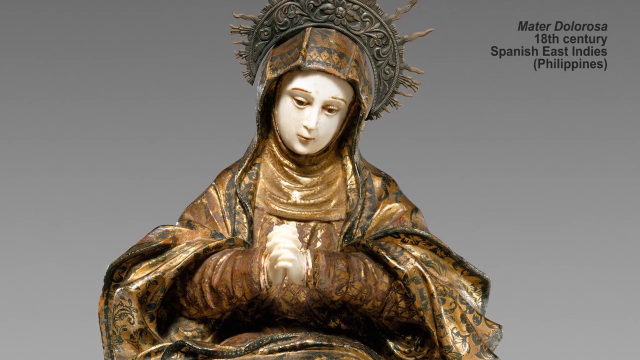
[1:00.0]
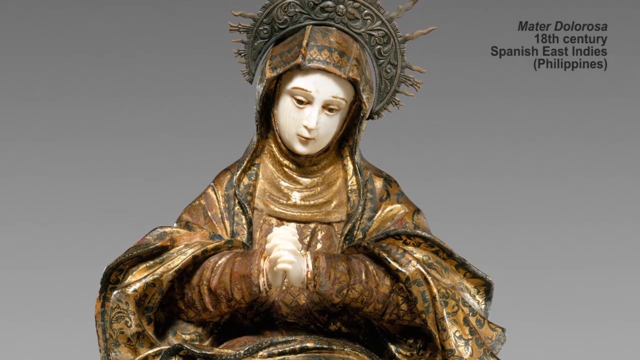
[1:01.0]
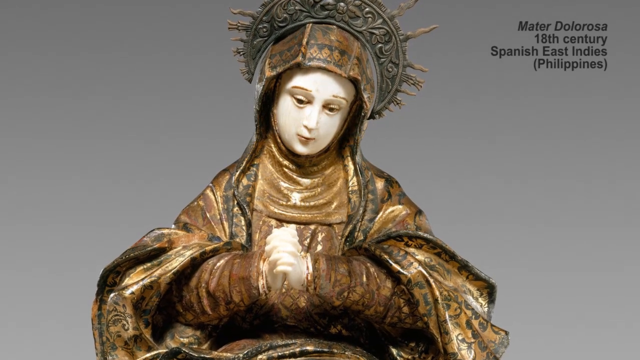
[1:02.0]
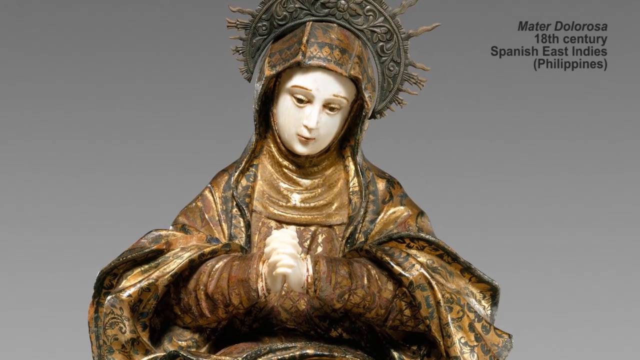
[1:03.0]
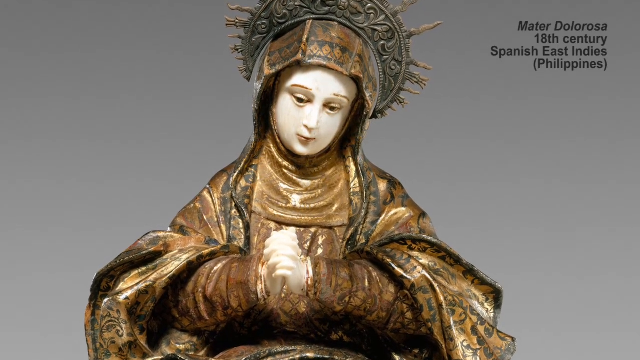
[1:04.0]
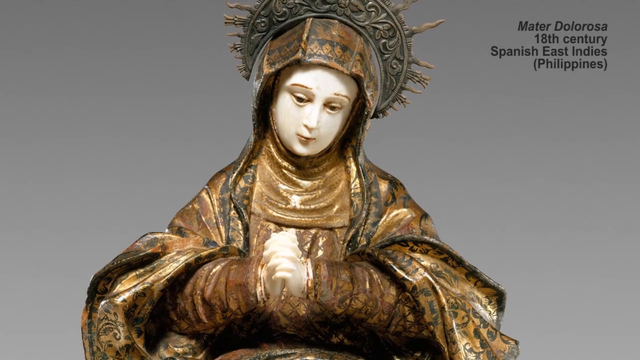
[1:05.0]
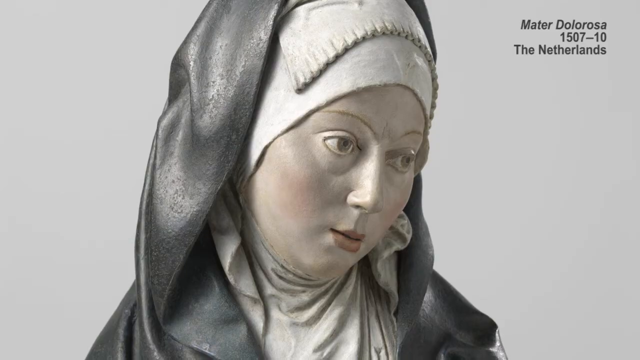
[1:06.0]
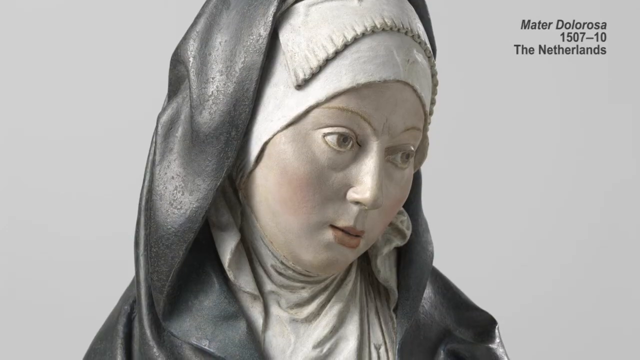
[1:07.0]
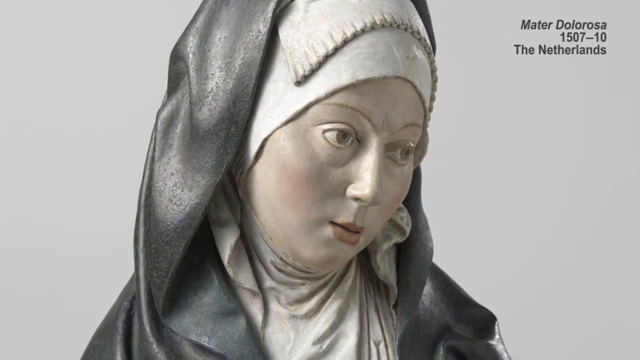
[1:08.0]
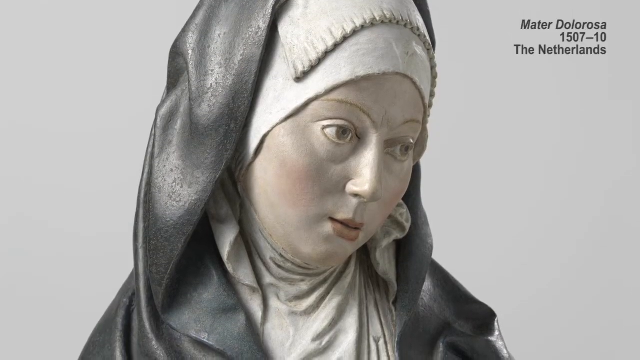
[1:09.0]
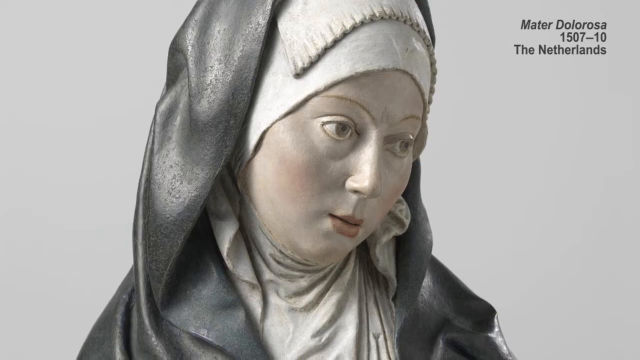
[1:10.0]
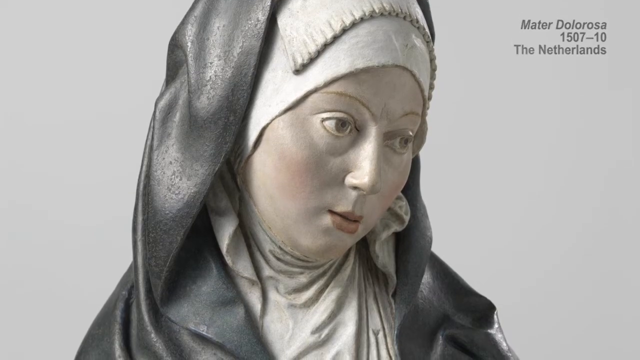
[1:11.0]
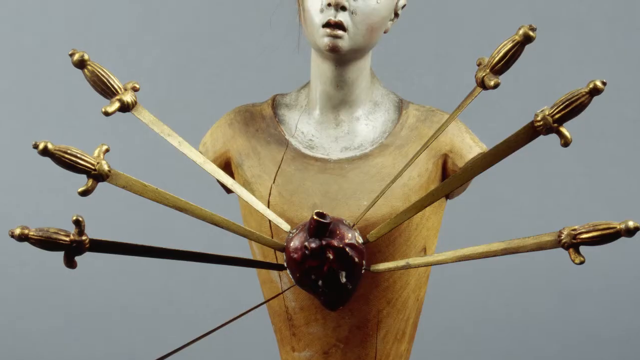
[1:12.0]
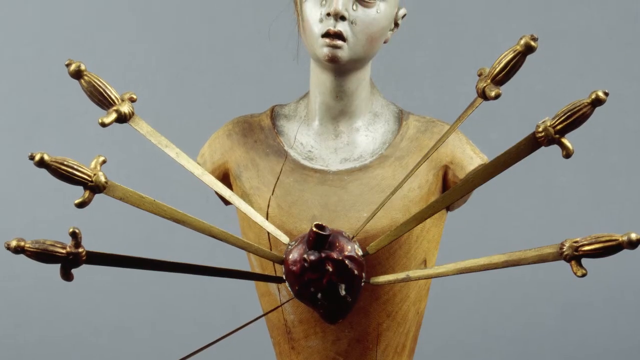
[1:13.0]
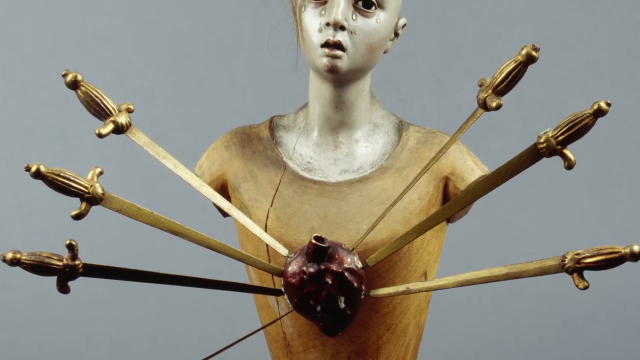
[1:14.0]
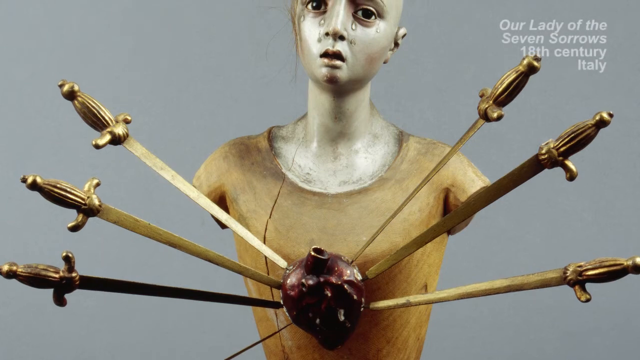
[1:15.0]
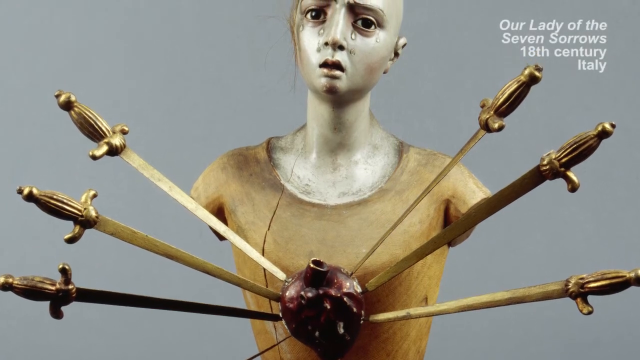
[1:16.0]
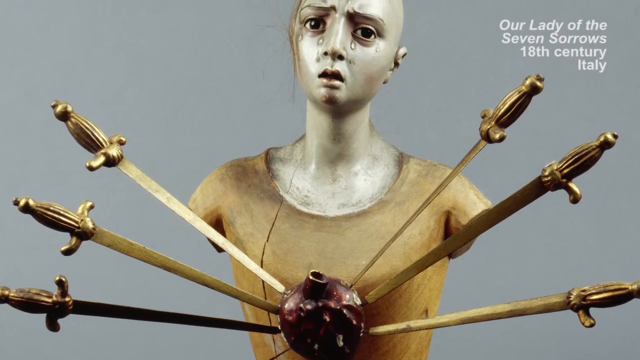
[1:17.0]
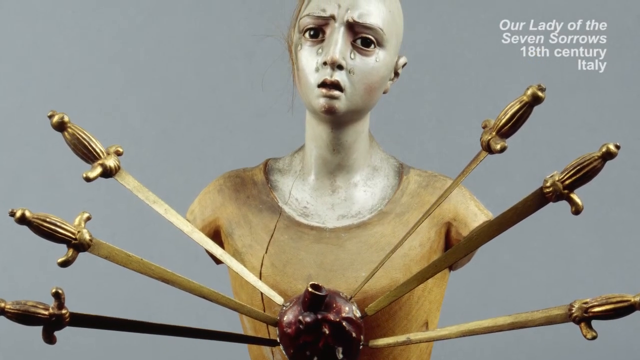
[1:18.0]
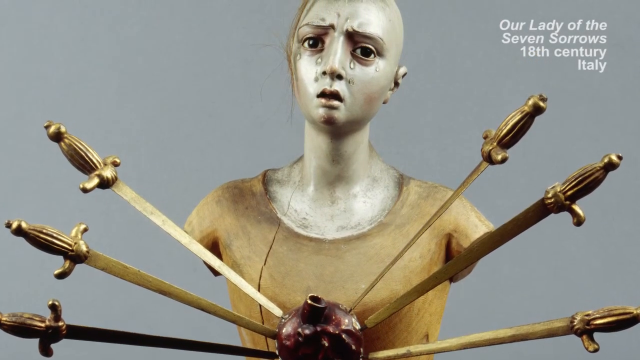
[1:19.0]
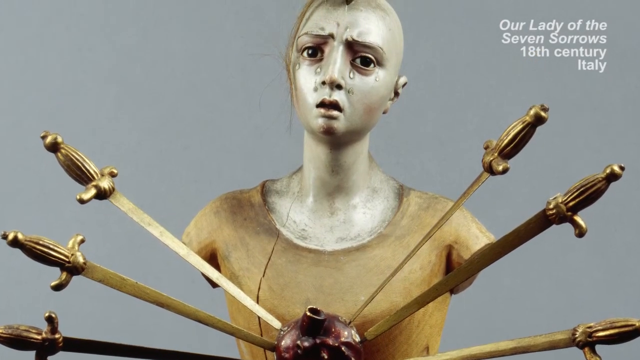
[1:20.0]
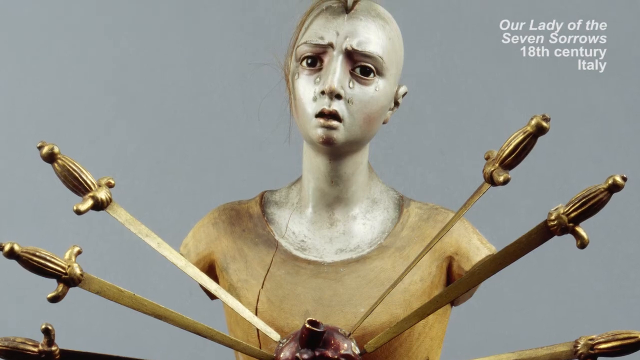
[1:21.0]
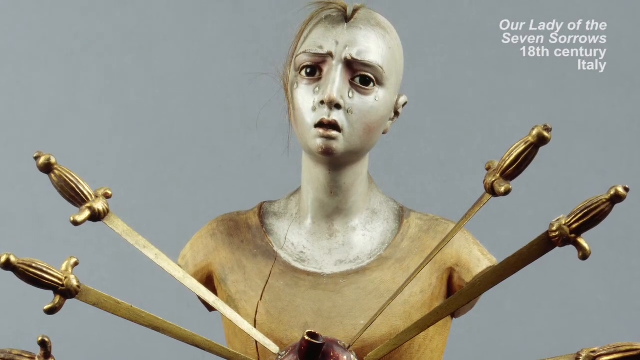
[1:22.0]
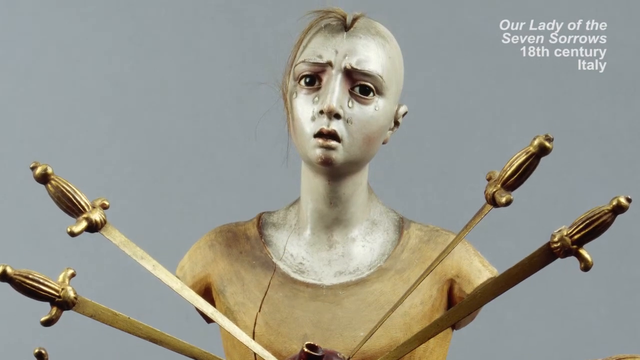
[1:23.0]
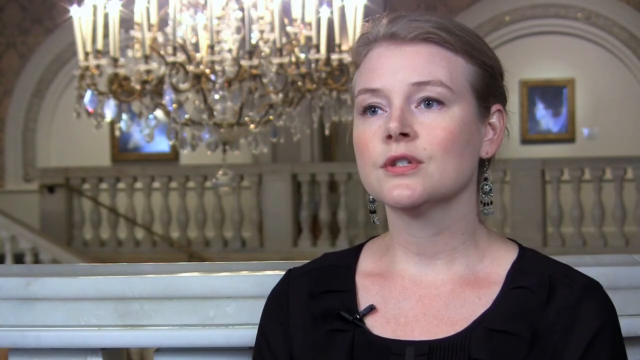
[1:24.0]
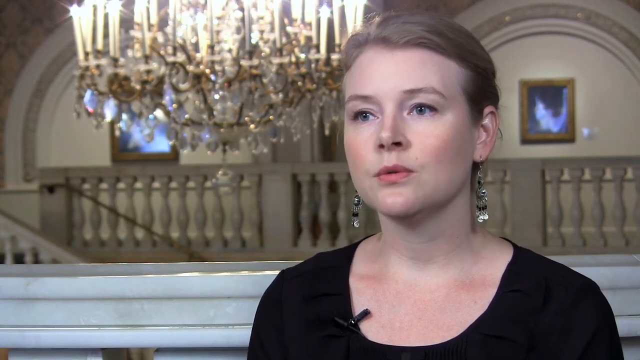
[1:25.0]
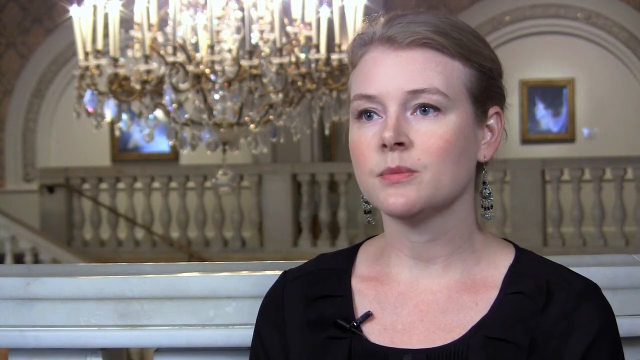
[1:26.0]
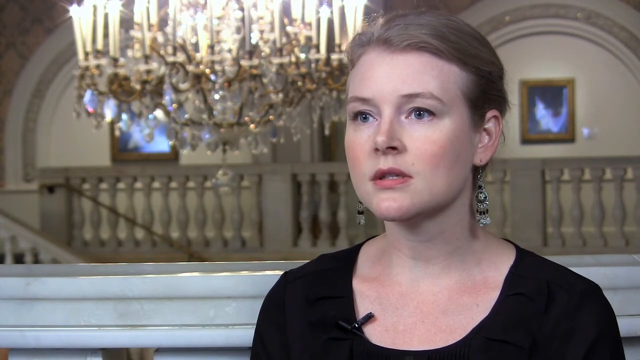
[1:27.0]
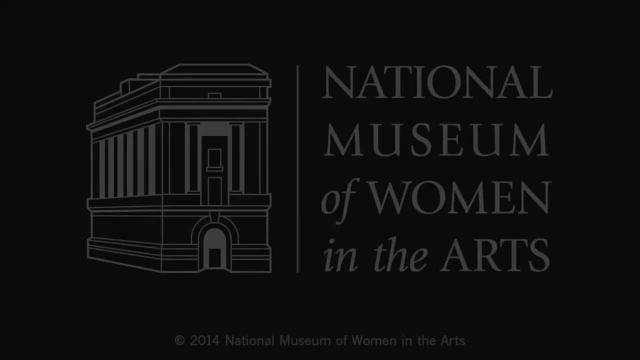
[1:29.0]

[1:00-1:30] The camera continues to zoom in on the statue, then the video cuts to another statue of what looks like another Virgin Mary-like figure. This figure is grey and wears grey, turned somewhat to the right with her head cocked to the right, looking forward almost toward the right side. The camera pans from the top of the statue toward the bottom, and in the upper right corner text reads "Maeter de la Rosa, 1507-10, The Netherlands." The video then cuts to another statue, and the camera pans from bottom to top. A heart sticks out of a woman's chest, with several swords going into it, three on the right side and four on the left. As the camera slowly pans up, tears are visible in the woman's eyes. In the top right corner, text reads "Our Lady of the Seven Sorrows, 18th Century Italy." The woman looks like she is in agonizing pain, with tears right under her eyes, and she appears to be mostly bald except for a bit of hair in the center of her head.